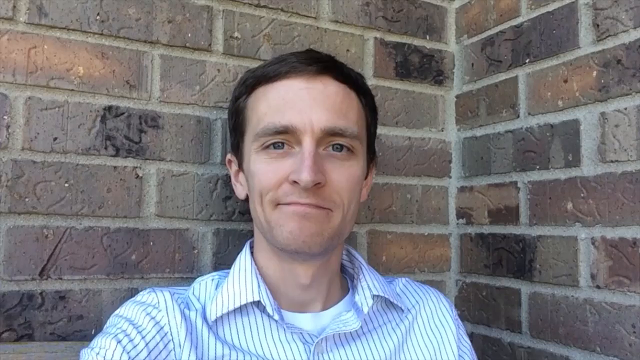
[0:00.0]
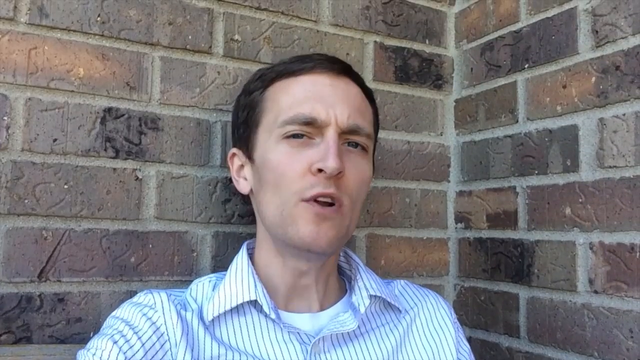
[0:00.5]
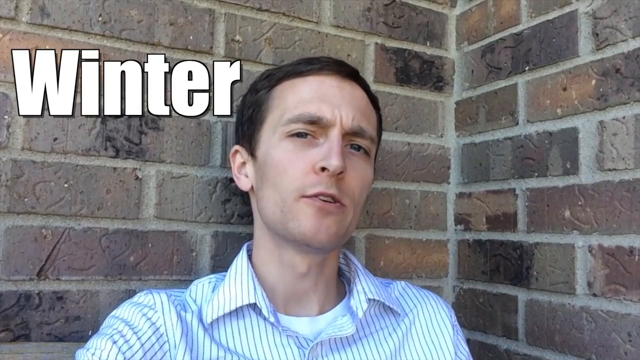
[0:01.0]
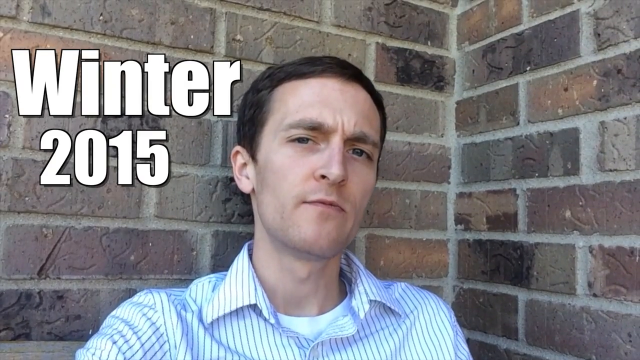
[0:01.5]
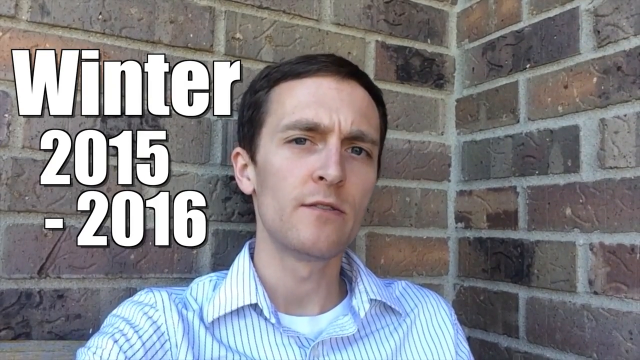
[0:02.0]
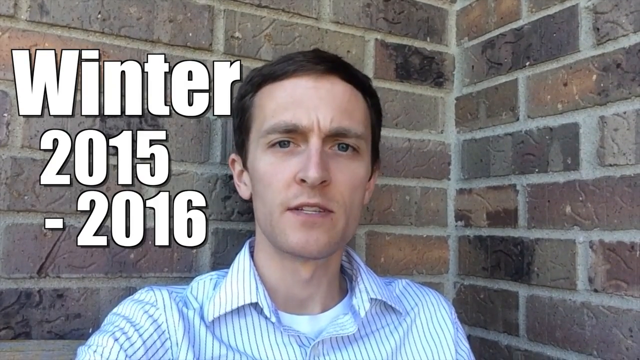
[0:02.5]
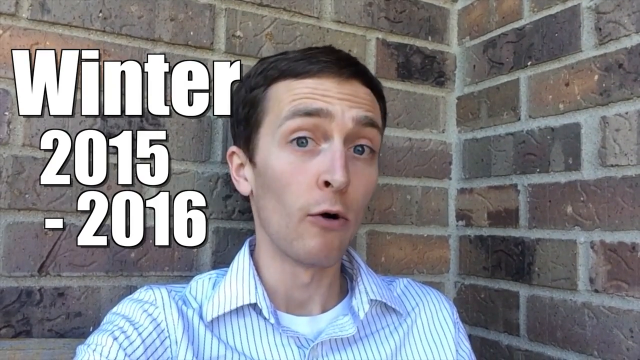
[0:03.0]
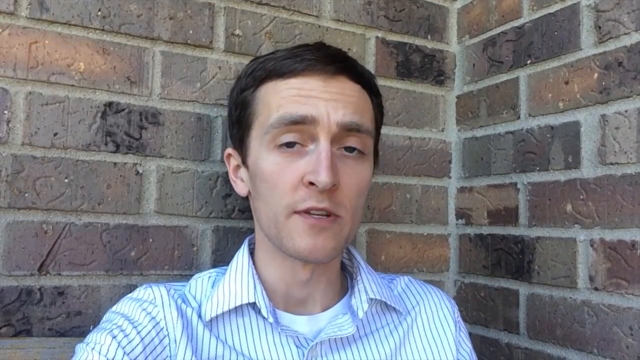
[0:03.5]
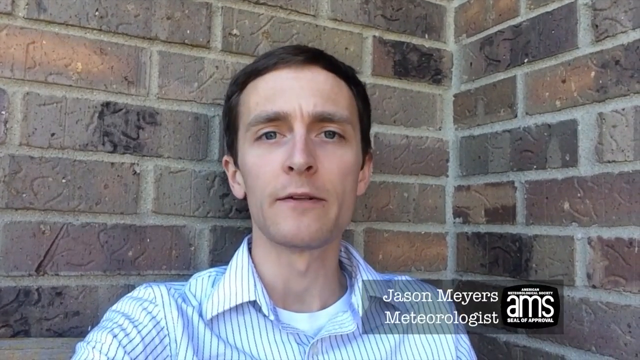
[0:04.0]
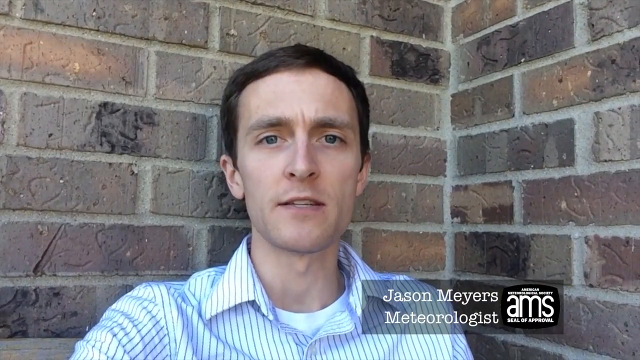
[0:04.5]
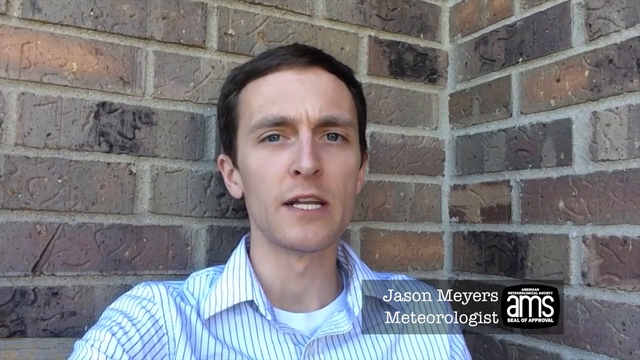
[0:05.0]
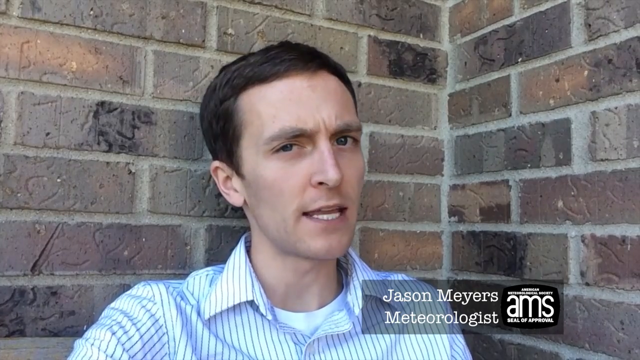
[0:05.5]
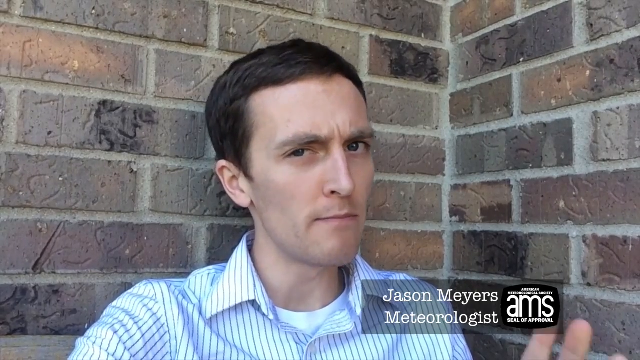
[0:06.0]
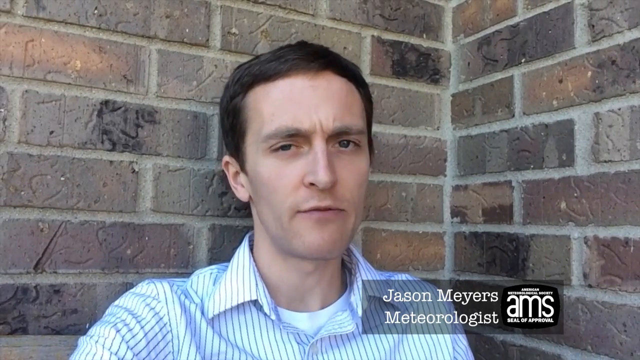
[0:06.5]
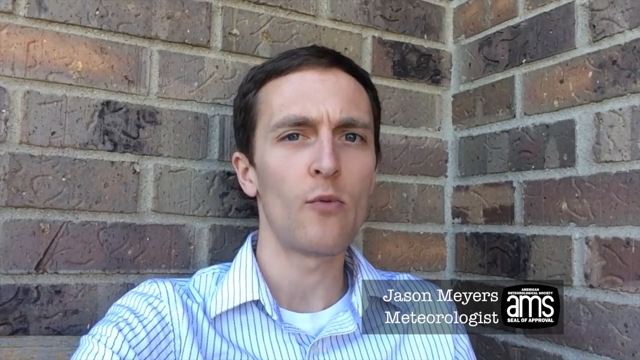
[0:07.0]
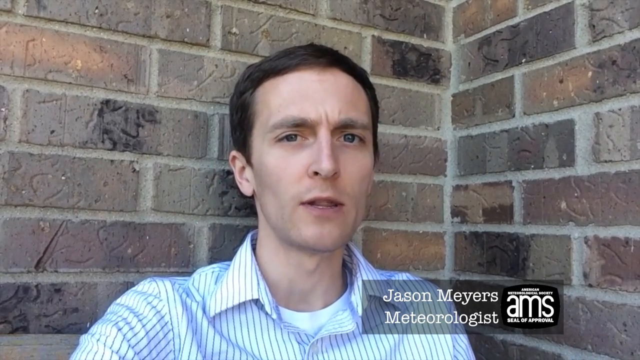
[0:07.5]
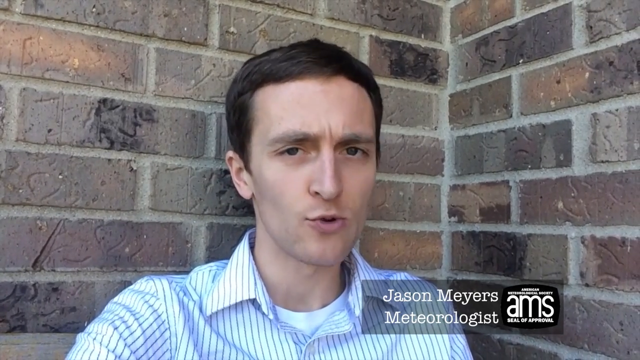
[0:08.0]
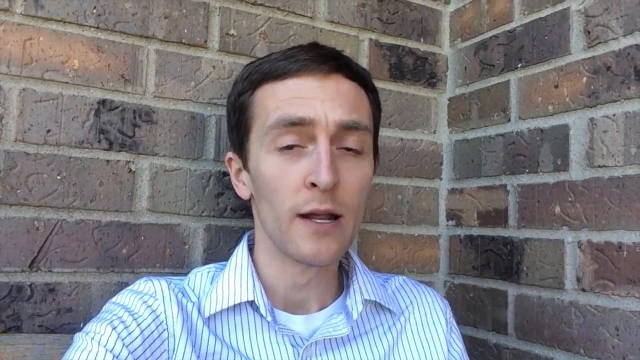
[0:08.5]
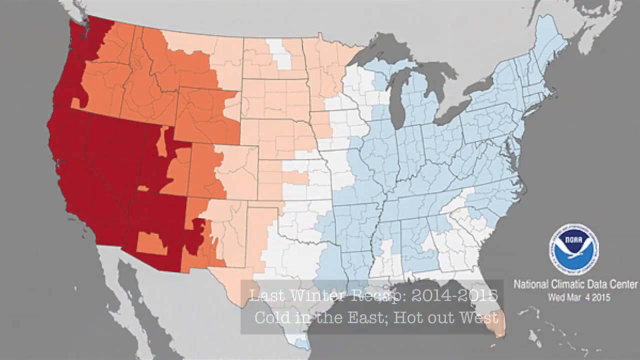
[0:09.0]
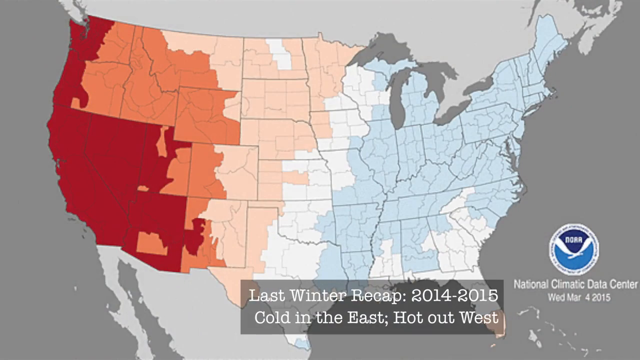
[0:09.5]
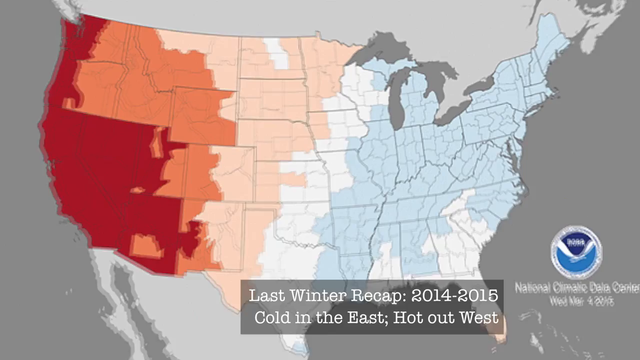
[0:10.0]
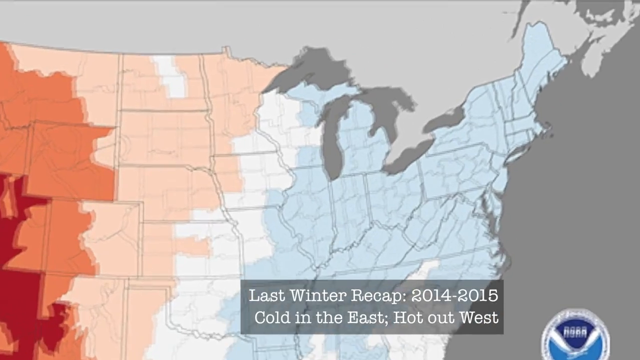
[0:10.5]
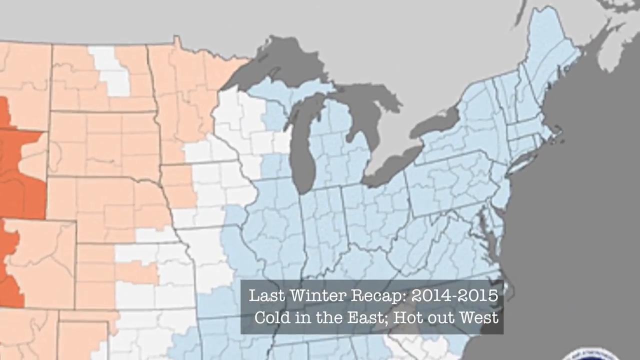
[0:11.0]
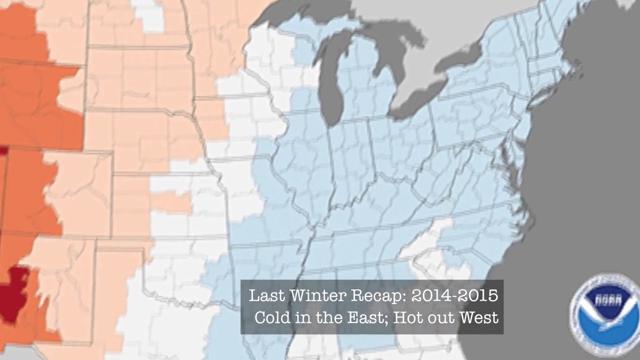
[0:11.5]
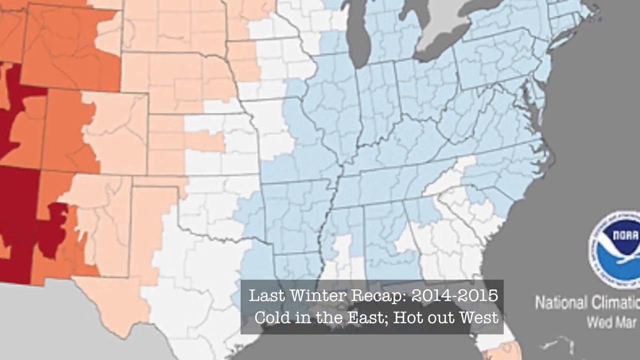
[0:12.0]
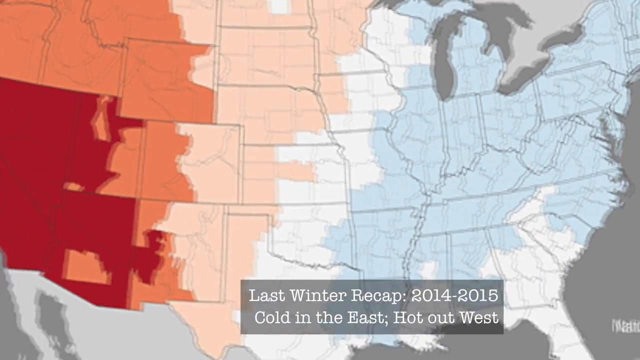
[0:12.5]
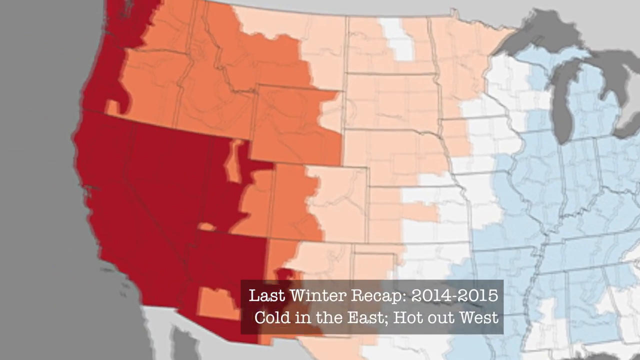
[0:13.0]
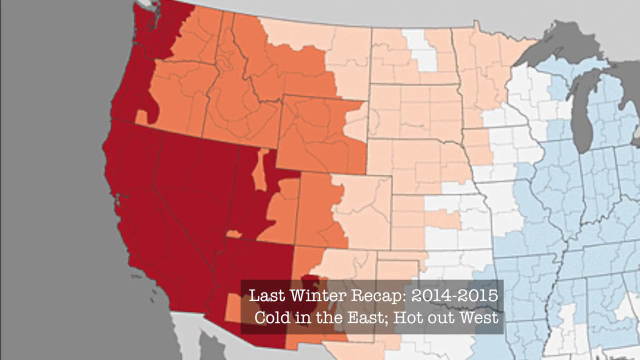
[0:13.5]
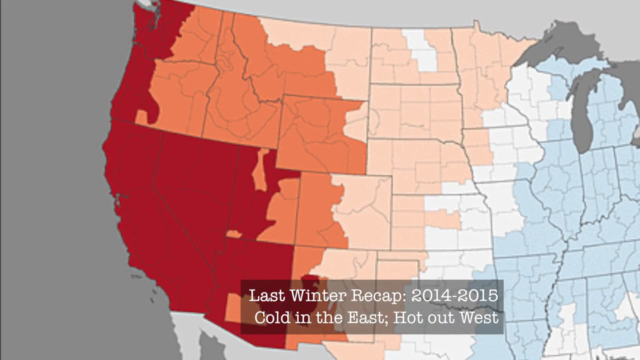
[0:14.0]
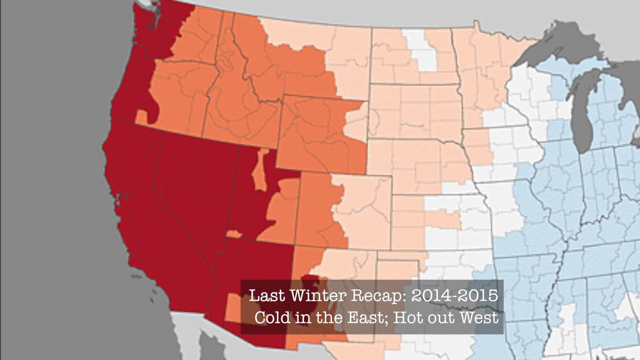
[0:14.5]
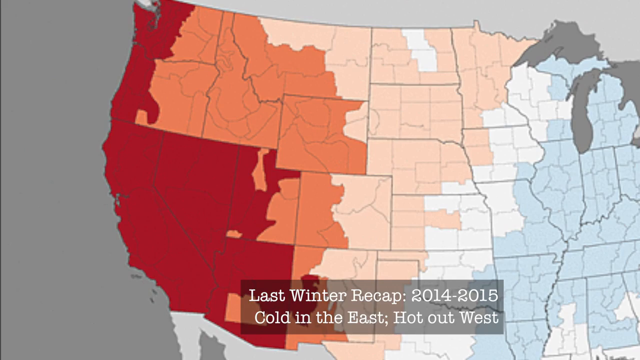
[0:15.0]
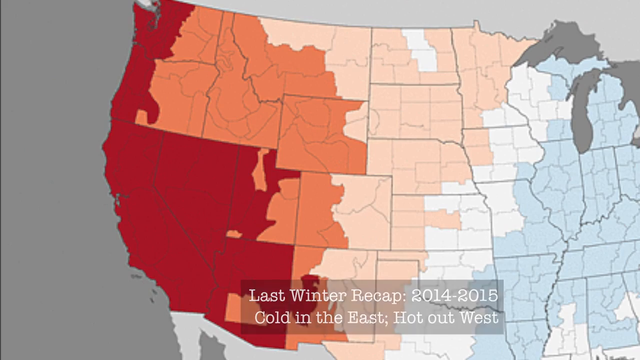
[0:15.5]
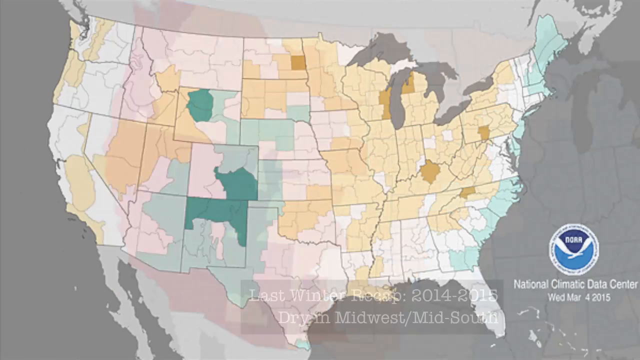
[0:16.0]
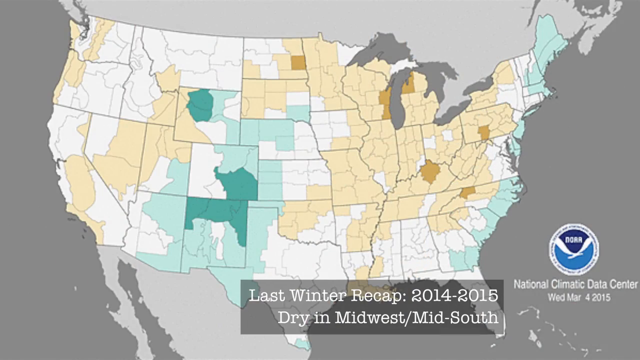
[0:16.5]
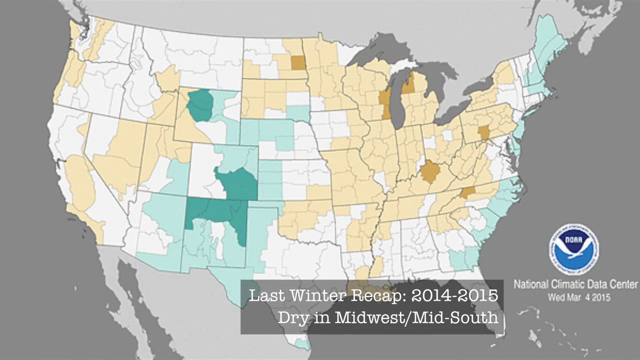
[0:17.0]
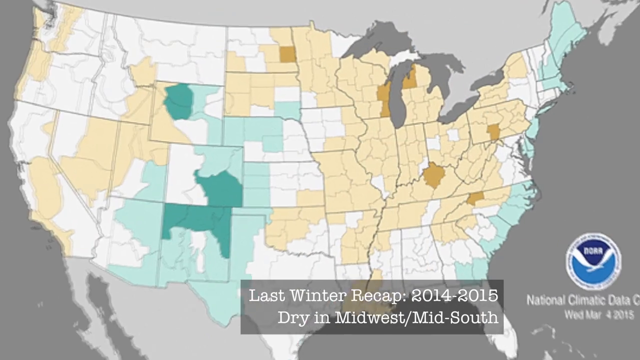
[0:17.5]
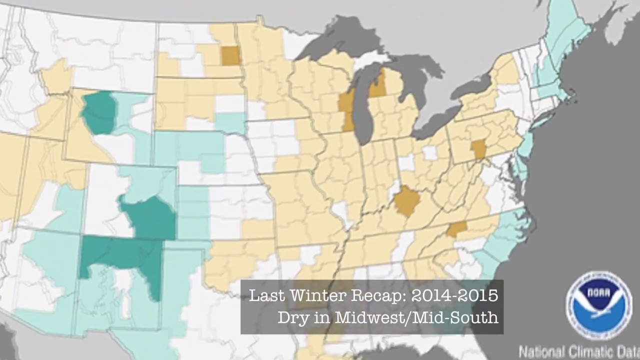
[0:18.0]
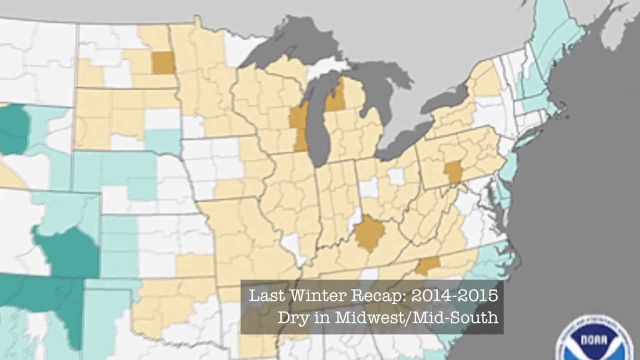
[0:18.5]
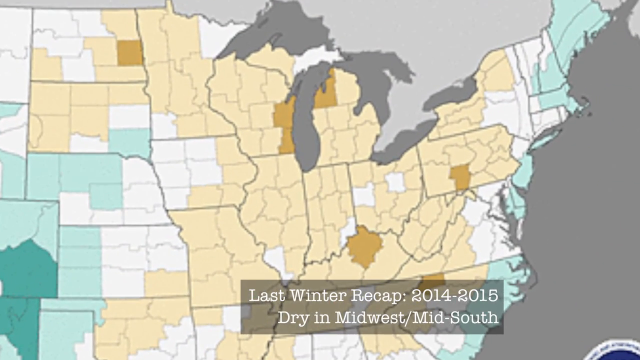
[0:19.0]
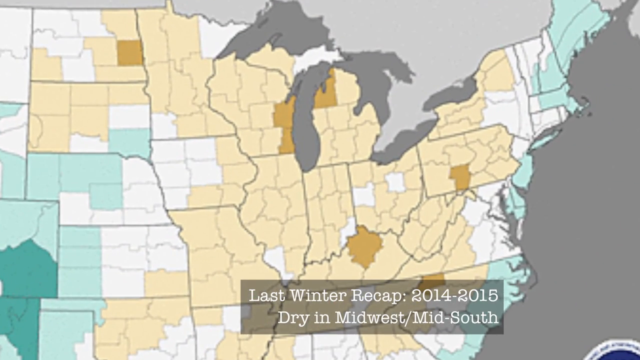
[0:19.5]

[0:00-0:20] A white man with short, dark hair wears a striped white and blue button-up collared shirt with a white T-shirt underneath. The words "winter" and "2015-2016" pop up on the left side of the screen, and in the bottom right his name appears: "Jason Meyers, meteorologist." He looks at the camera and talks, his head moving a lot. The video then cuts to a map of the United States, with the left side of the U.S. in red and orange colors and the right side in whitish and blue. It zooms in quickly and then zooms out, while the bottom of the screen reads "last winter recap: 2014 to 2015 cold in the east hot out west." The view pans over to the west side of the U.S., then changes to a new map of the United States and zooms to the east side, which is in pale colors.